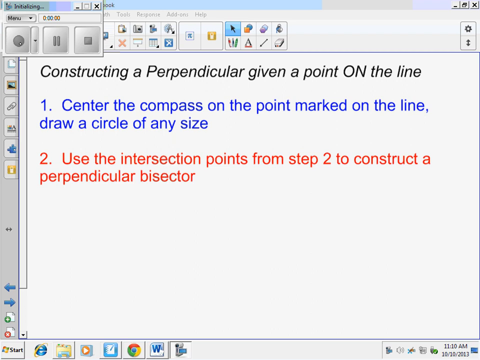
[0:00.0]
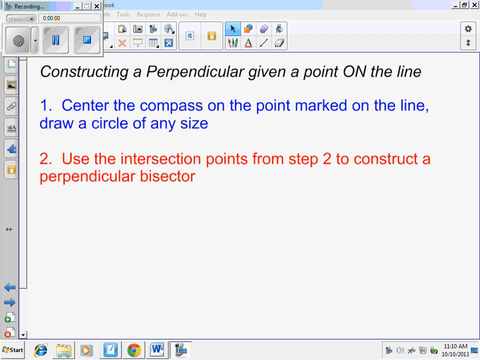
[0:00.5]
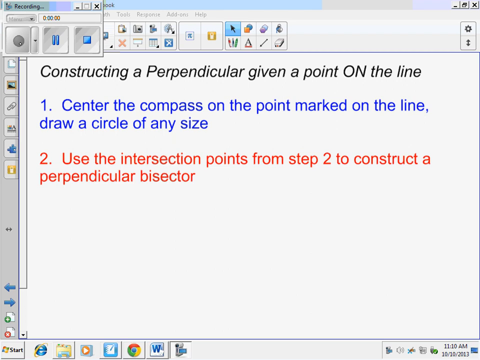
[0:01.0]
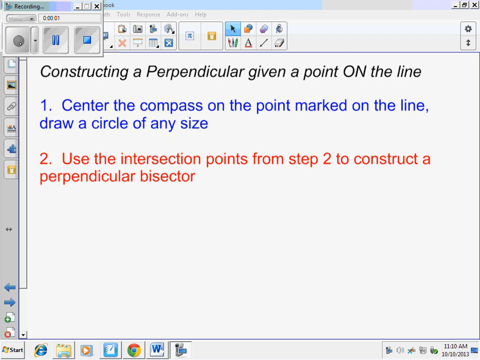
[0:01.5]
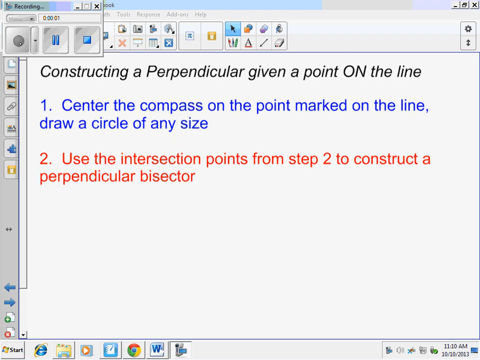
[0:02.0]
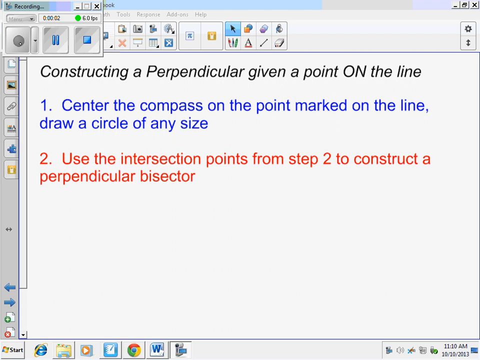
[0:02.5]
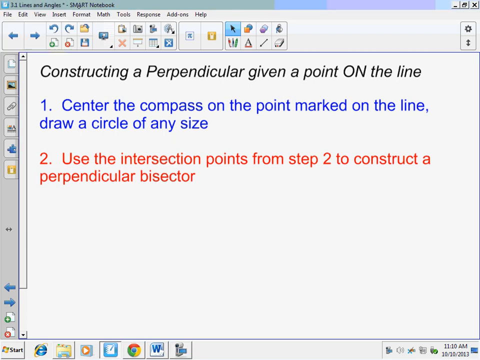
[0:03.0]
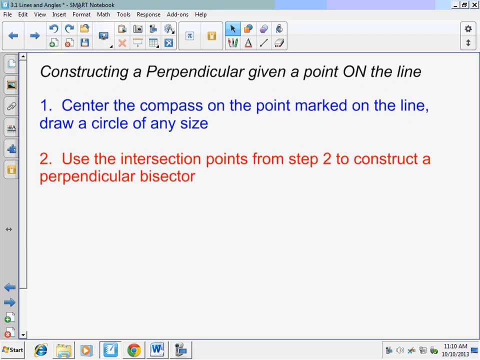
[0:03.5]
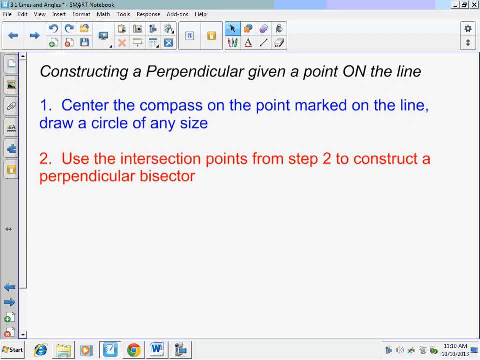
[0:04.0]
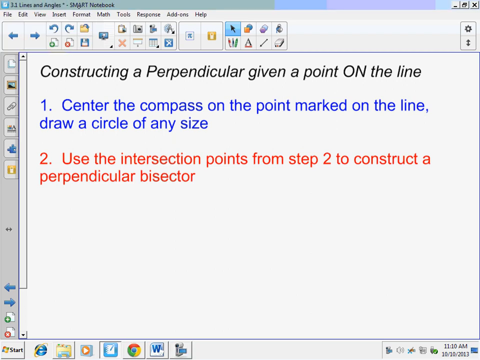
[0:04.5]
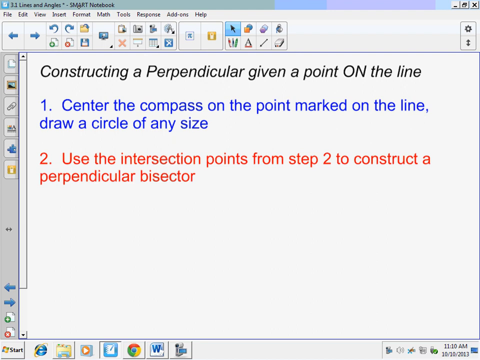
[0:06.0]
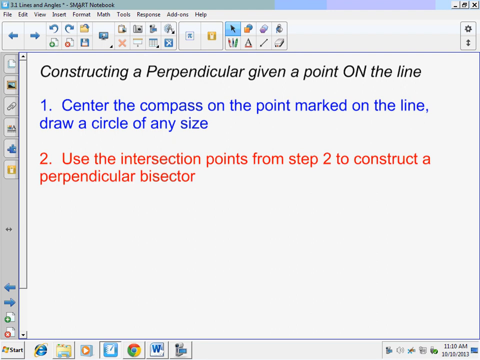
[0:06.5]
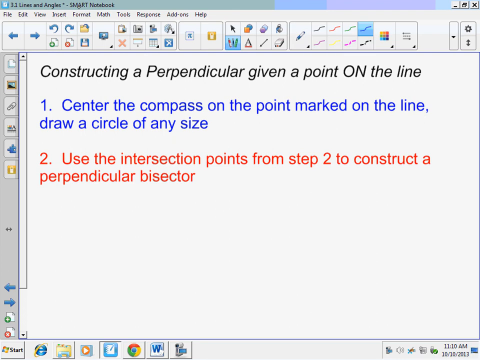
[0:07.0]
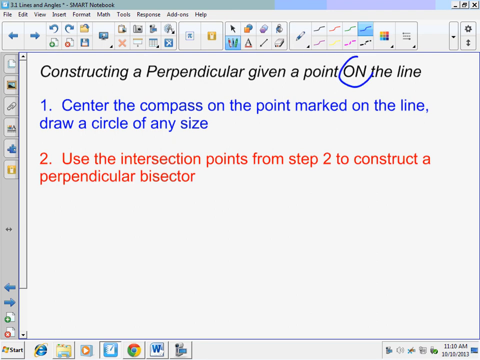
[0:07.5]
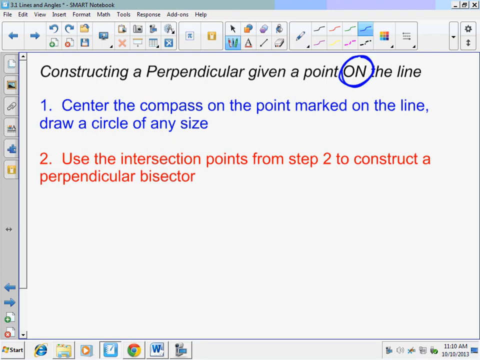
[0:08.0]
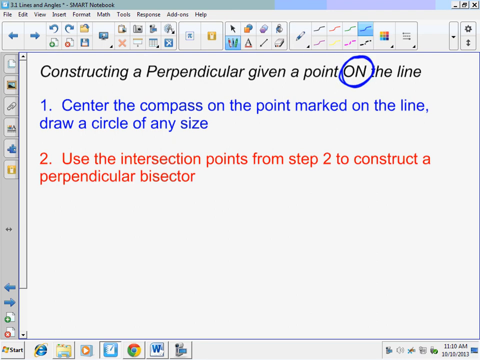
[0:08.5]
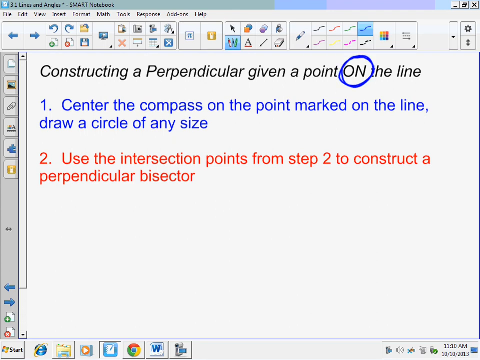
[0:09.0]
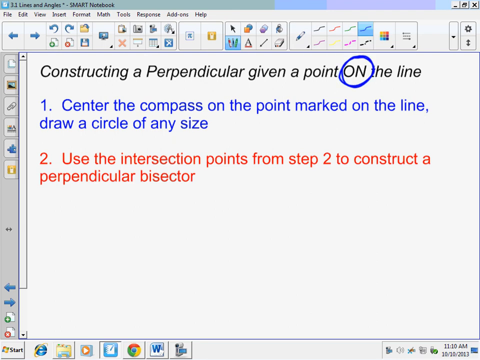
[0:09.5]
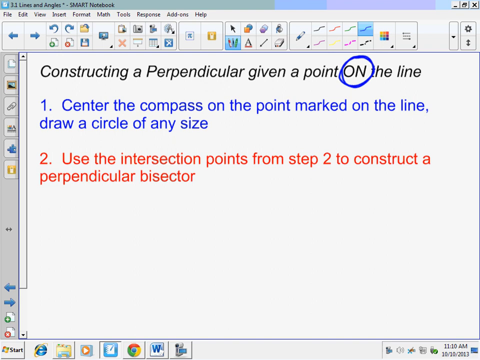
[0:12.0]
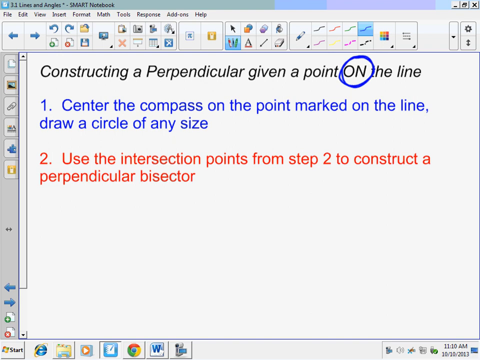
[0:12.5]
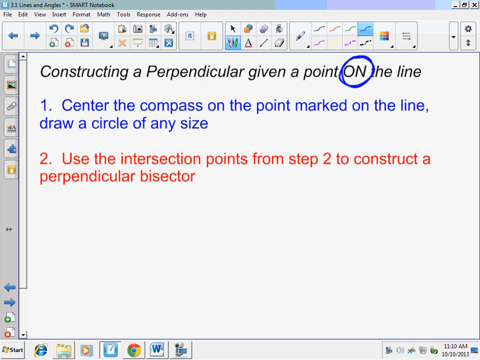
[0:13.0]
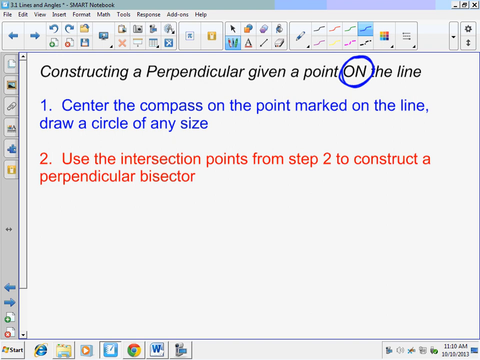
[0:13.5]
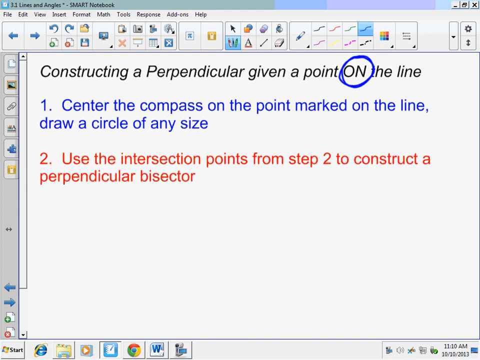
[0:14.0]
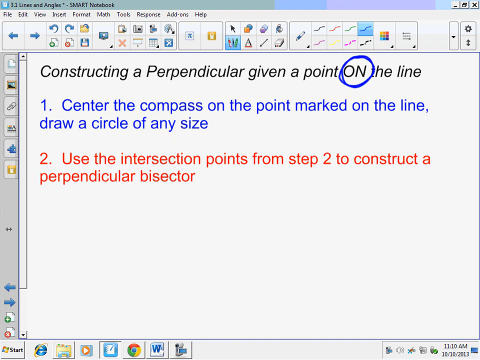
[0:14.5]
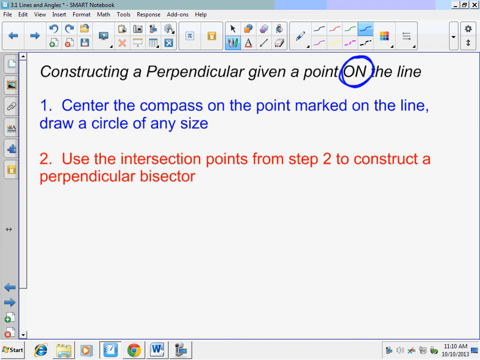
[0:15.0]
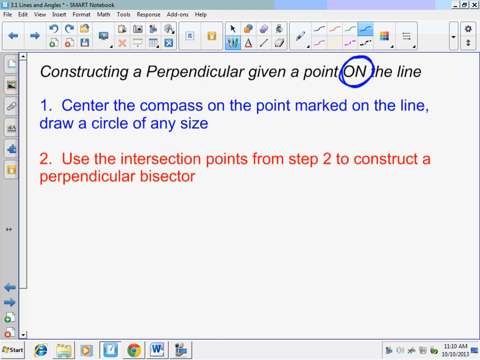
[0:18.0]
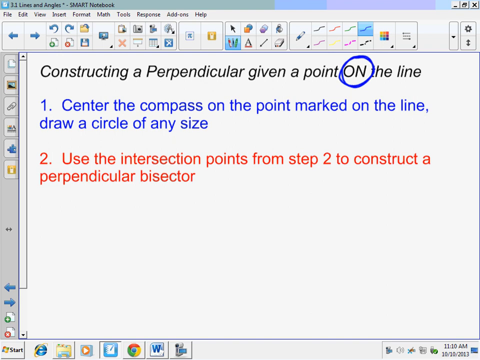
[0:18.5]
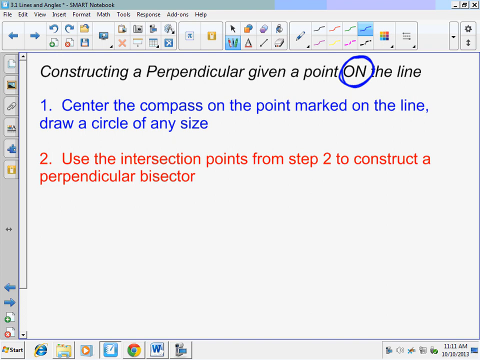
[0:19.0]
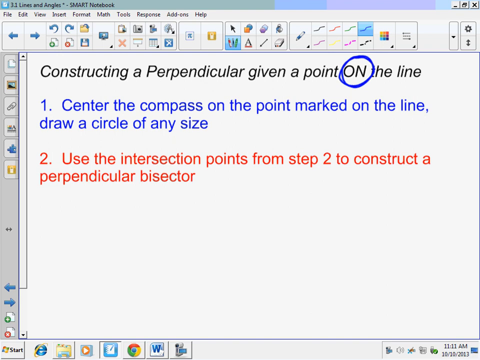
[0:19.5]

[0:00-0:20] Someone records their computer screen, where an application shows multiple lines of text reading "constructing a perpendicular given point on the line. 1. Center the compass on the point marked on the line. Draw a circle of any size. 2. Use the intersection points from step 2 to construct a perpendicular bisector." When the user opens the paint tool, a new box opens on top of the tools at the very top, showing a marker as well as multiple different colored lines. The blue line is selected. The user moves the mouse cursor to circle the word "on" in the first line in blue, then crosses out the number 2 in the third, bottom line of text with the same paint tool.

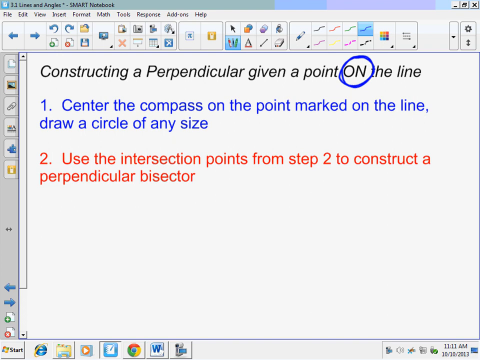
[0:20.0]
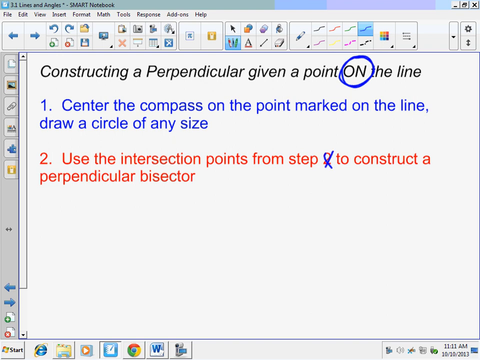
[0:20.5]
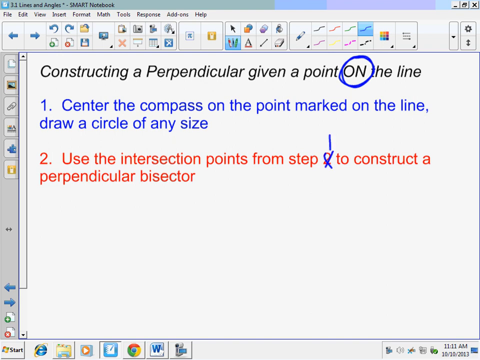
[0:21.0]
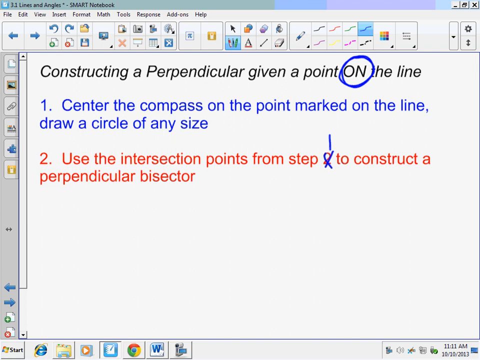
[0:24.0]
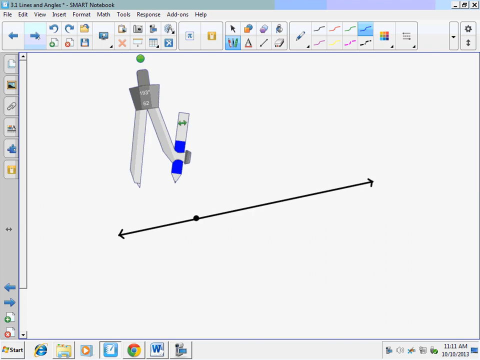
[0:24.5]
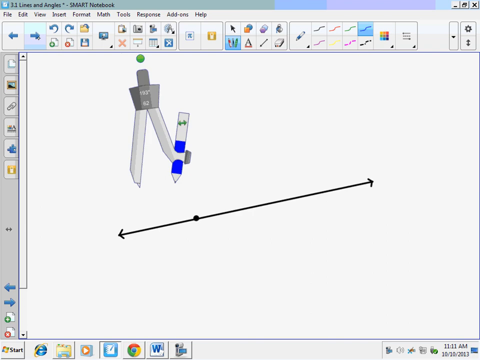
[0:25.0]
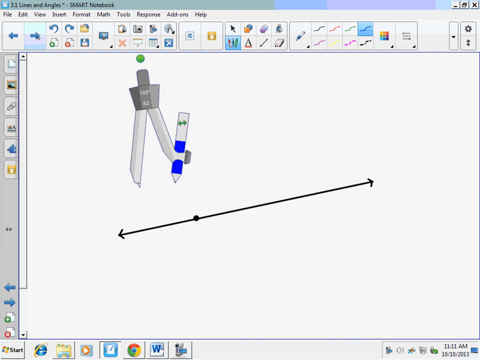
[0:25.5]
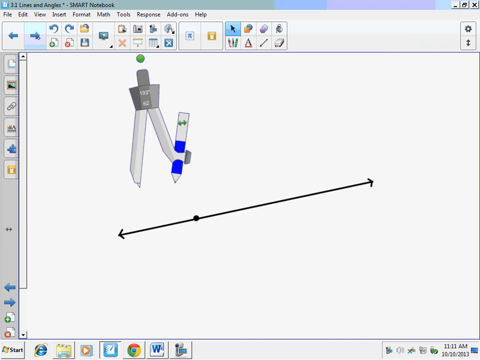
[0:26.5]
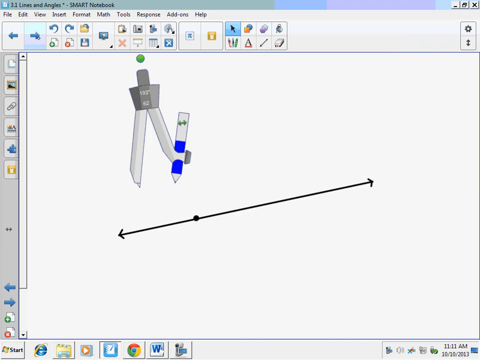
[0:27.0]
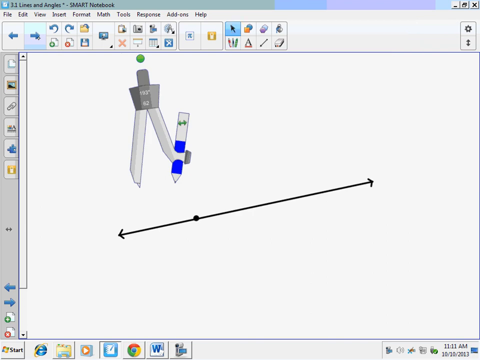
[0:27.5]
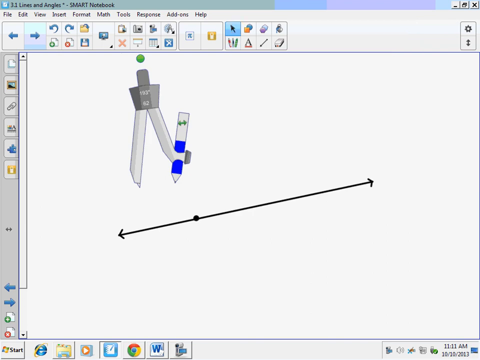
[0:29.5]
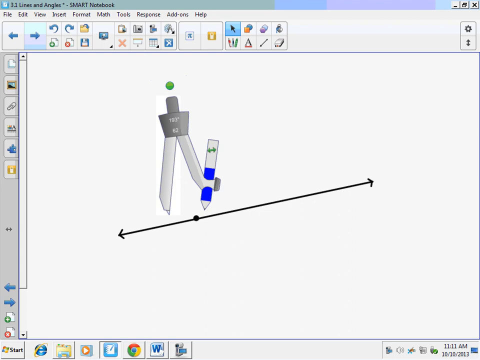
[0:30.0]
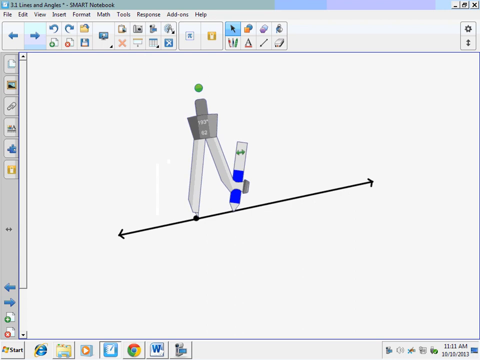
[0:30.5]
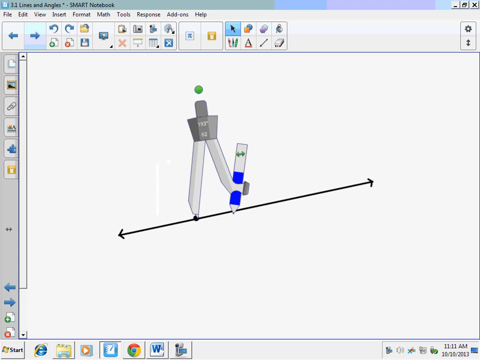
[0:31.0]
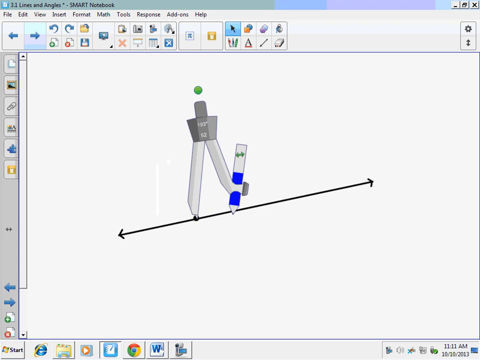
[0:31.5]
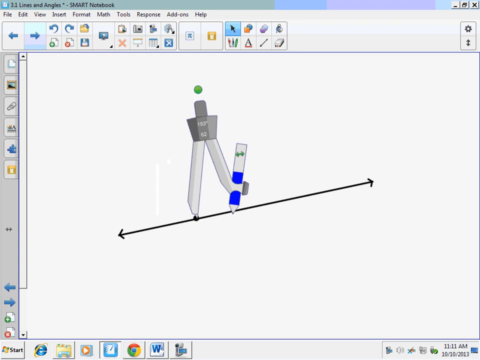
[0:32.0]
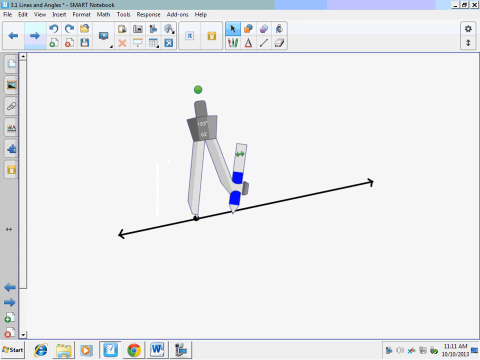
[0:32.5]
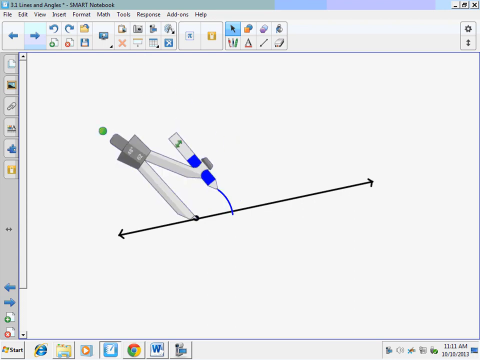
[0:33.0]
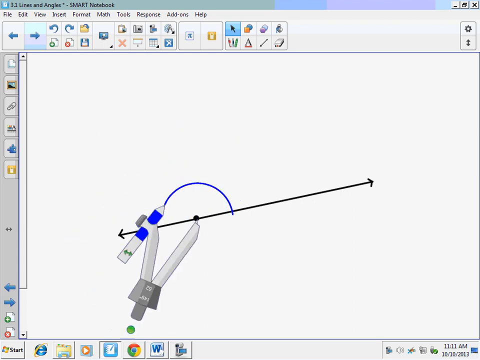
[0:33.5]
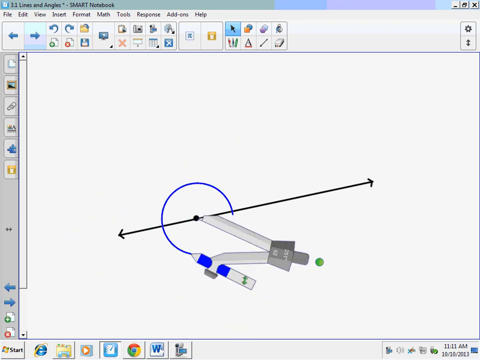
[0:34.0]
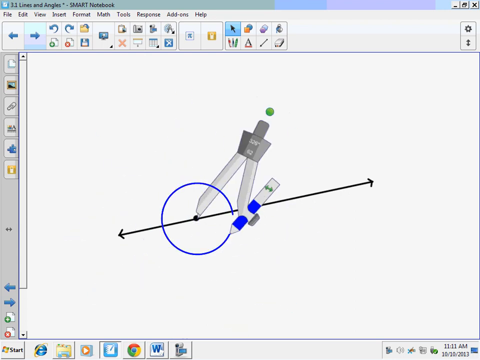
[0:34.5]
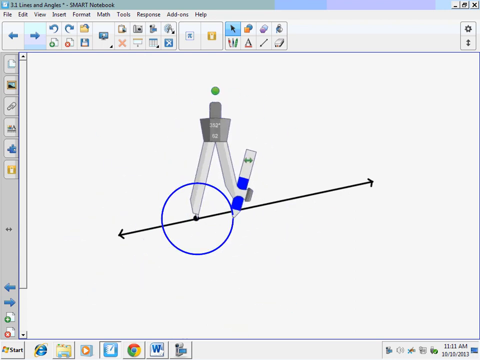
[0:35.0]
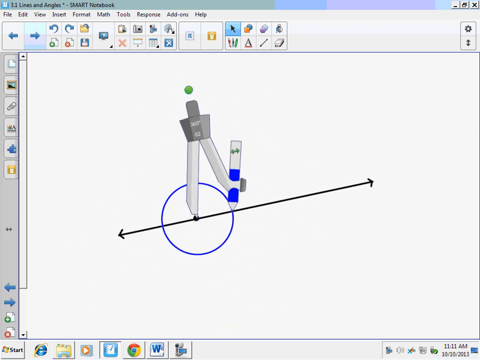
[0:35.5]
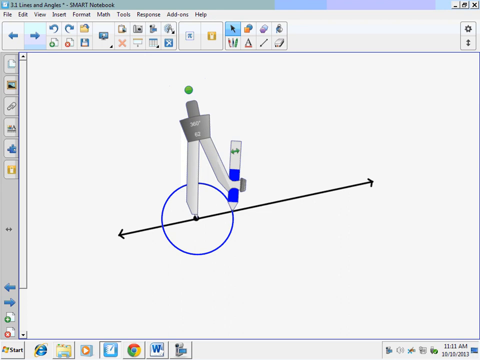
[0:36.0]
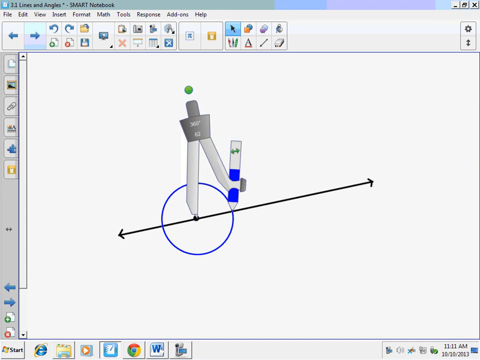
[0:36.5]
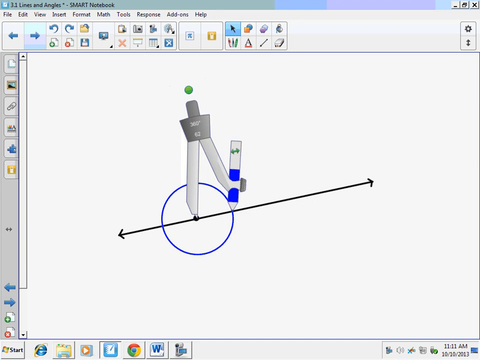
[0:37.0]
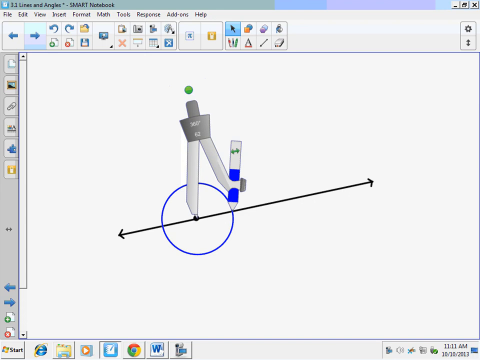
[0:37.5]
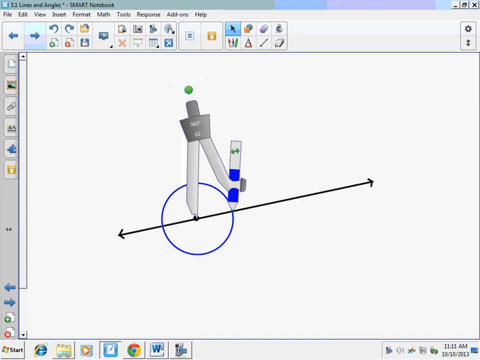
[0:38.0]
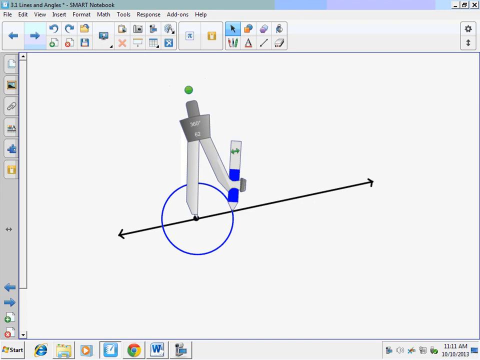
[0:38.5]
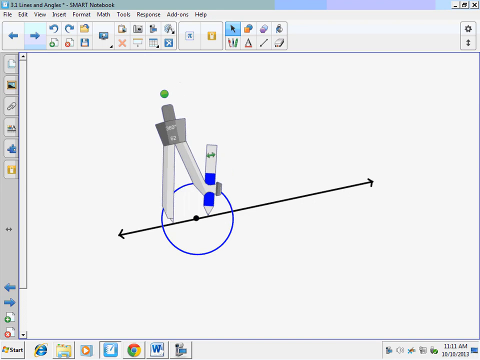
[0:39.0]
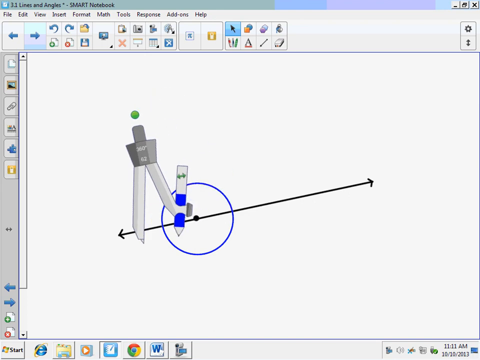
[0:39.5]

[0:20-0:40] Someone records their computer screen, where a program titled "3.3 Lines at Angle Smart Notebook" is open. Text on a white background inside the program reads "constructing a perpendicular given a point on the line," with "on" circled. The directions read "one, center the compass on the point marked on the line, draw a circle of any size. Two, use the intersection points for step two to construct a perpendicular bisector," with that second two crossed out. Using a blue marker tool, the user writes a one in blue above the X'd-out two in the final line. They then click a button at the top of the toolbox that is a right arrow pointing right. A cartoon graphic of a compass tool and a line appears; the line has a point closer to its left. The user clicks and moves the compass tool so that one point is on top of the point and the other side, which has a mock-up of a marker, is on the other. They spin the compass tool, forming a circle with the dot at its center, then move the compass to the side, away from the line.